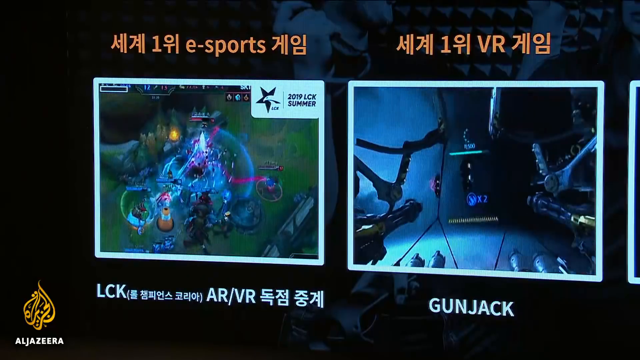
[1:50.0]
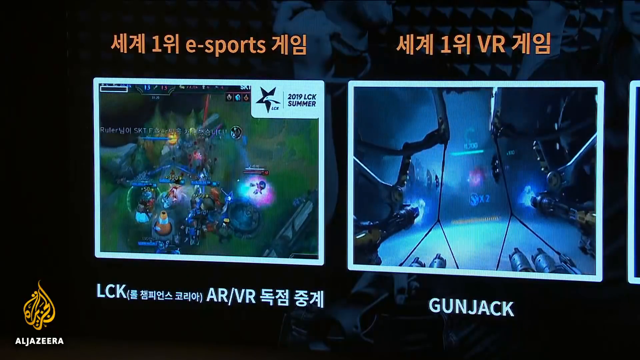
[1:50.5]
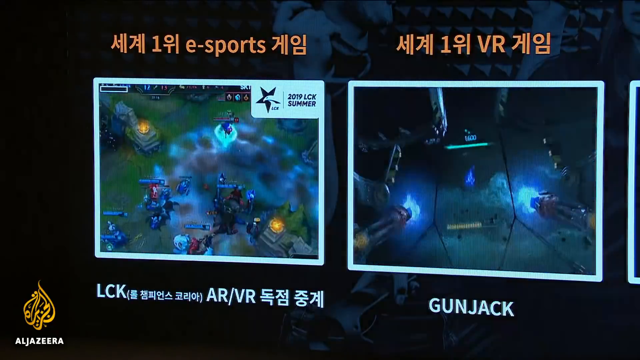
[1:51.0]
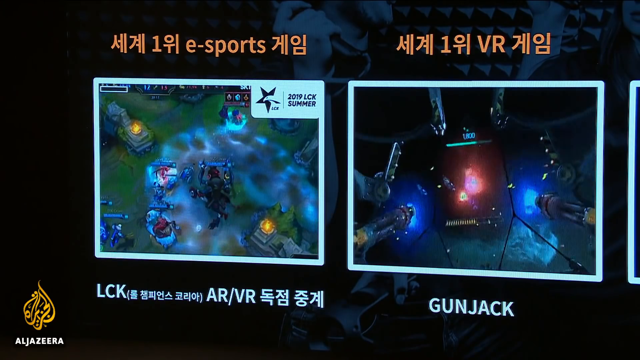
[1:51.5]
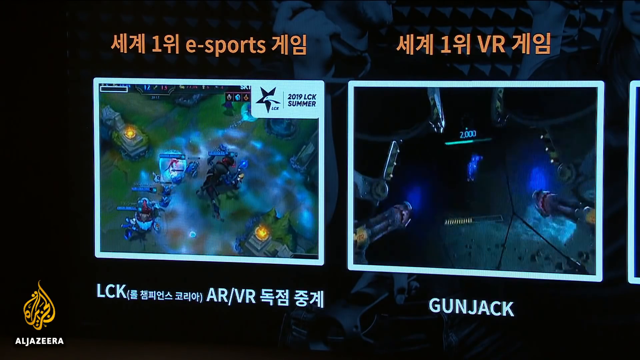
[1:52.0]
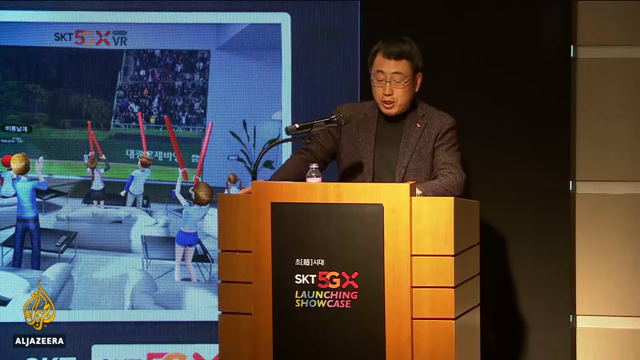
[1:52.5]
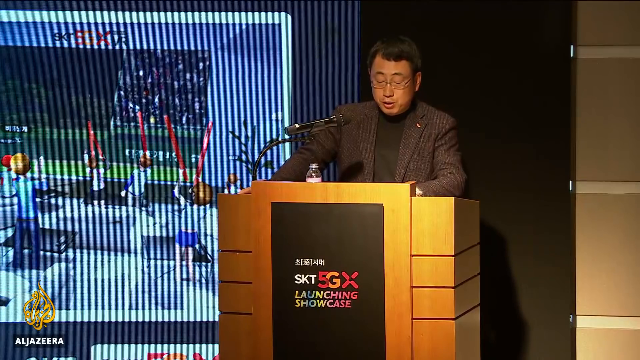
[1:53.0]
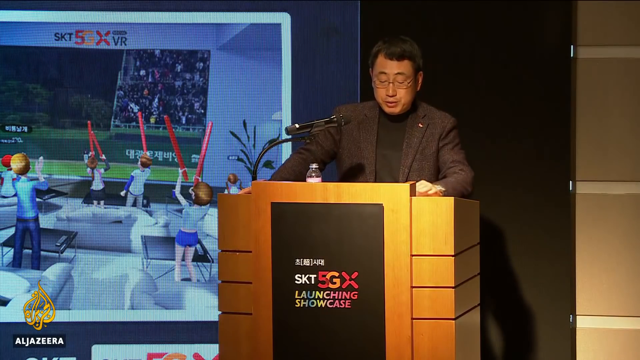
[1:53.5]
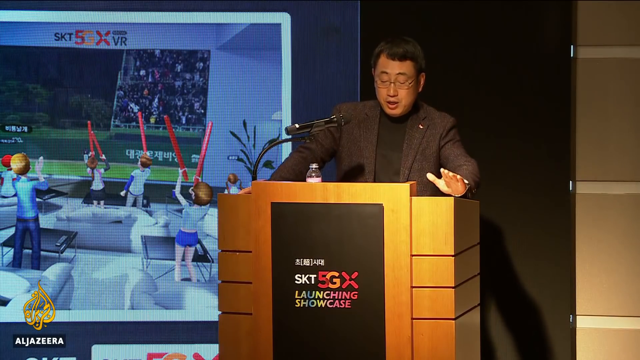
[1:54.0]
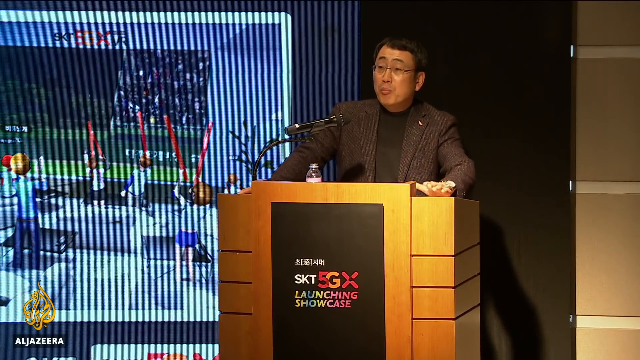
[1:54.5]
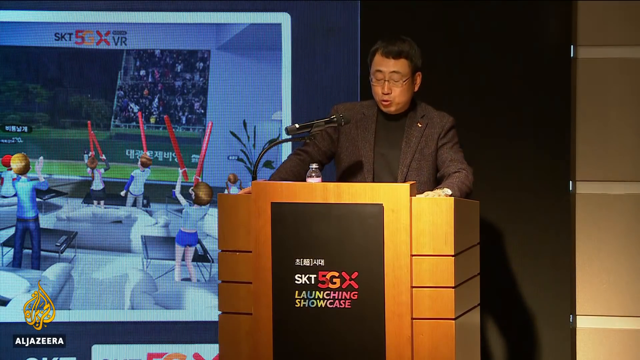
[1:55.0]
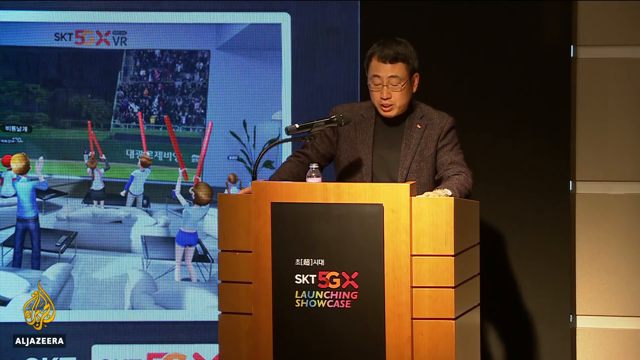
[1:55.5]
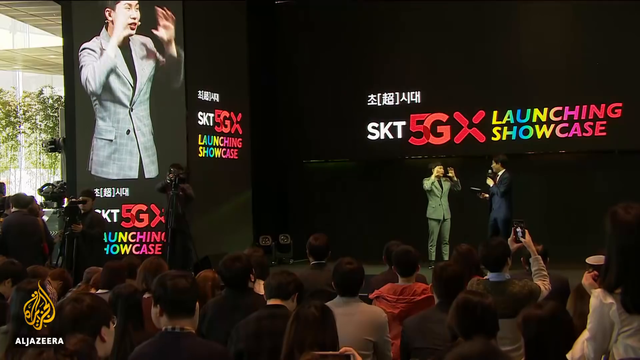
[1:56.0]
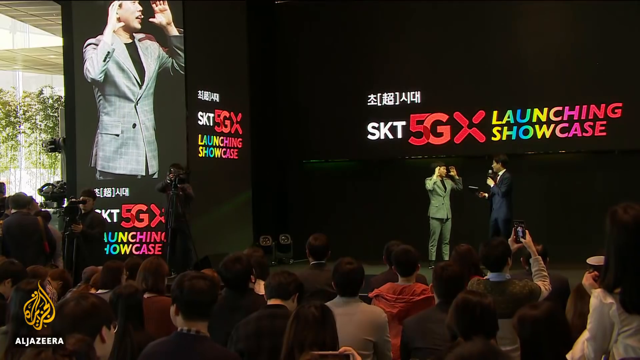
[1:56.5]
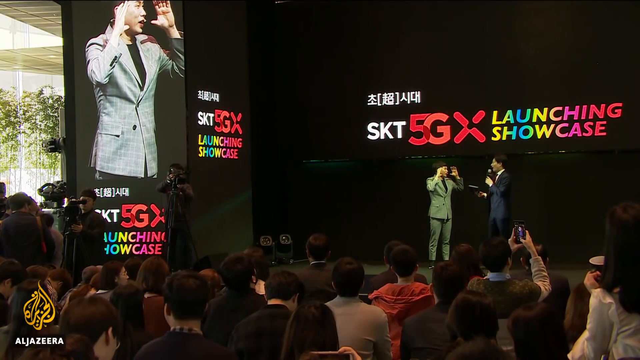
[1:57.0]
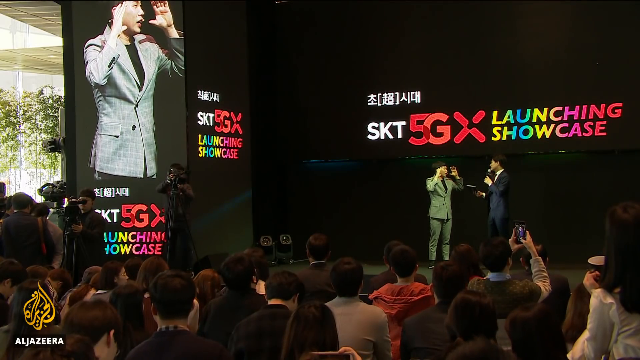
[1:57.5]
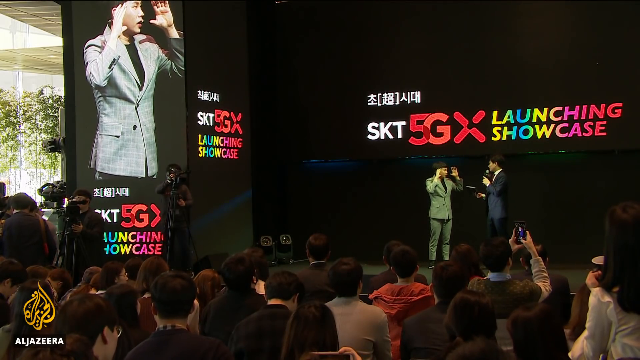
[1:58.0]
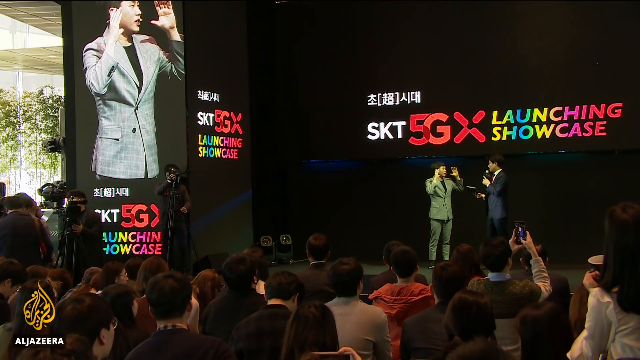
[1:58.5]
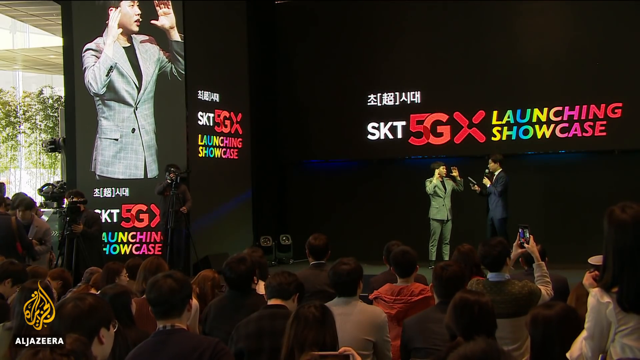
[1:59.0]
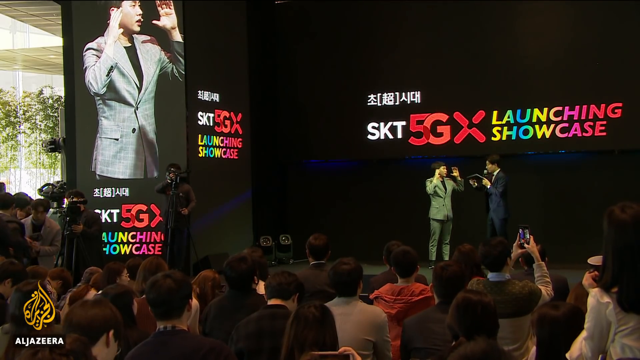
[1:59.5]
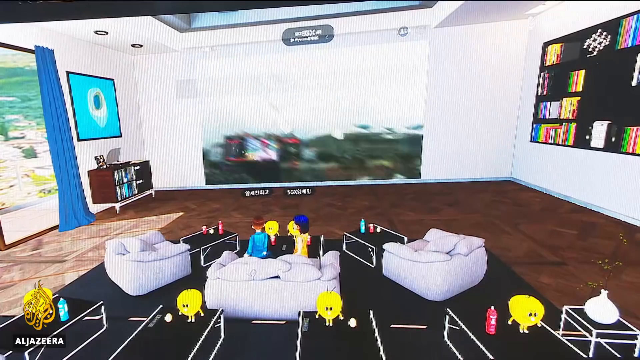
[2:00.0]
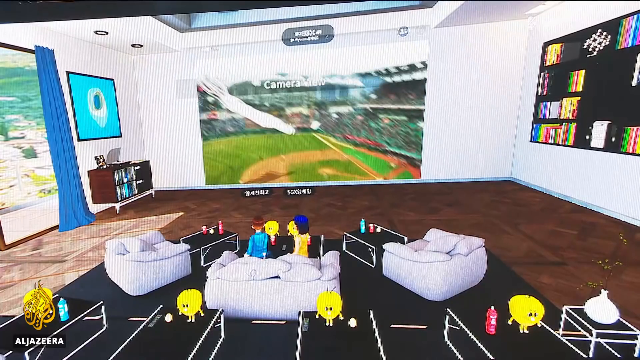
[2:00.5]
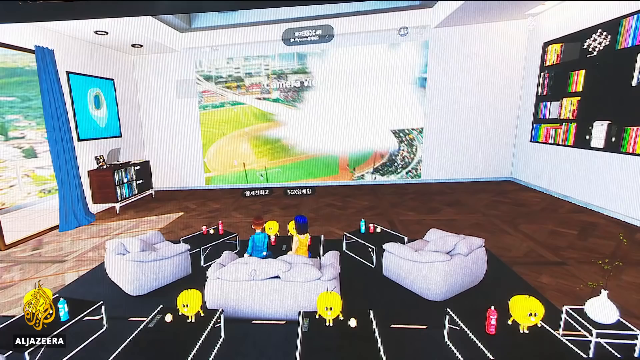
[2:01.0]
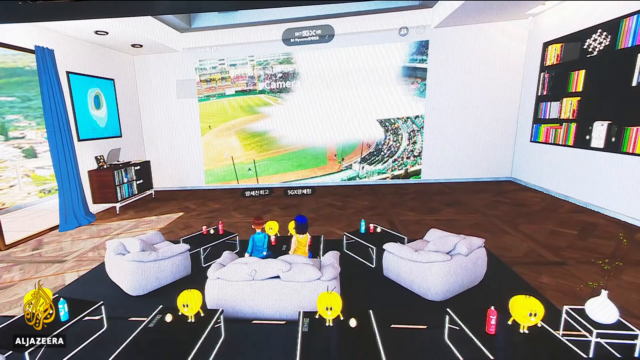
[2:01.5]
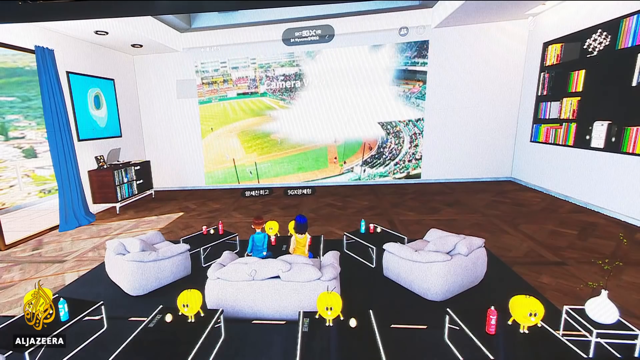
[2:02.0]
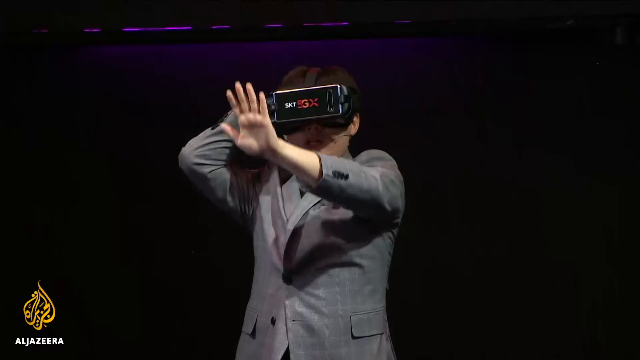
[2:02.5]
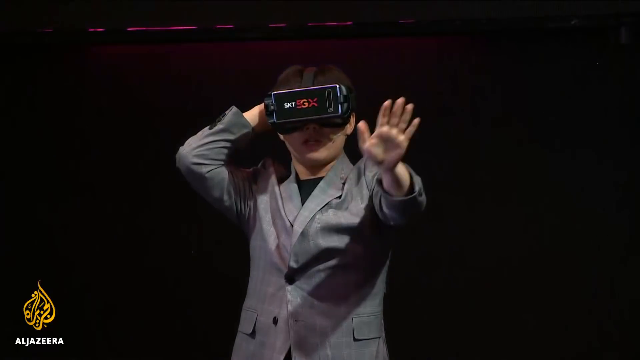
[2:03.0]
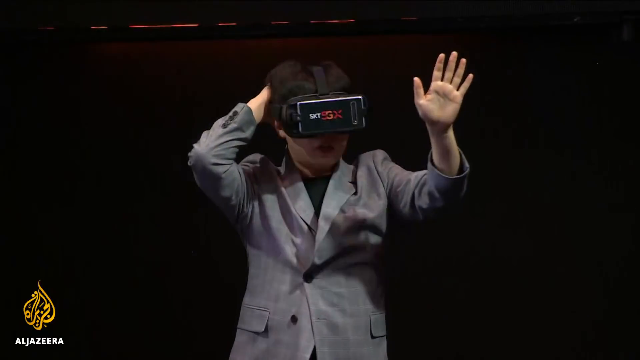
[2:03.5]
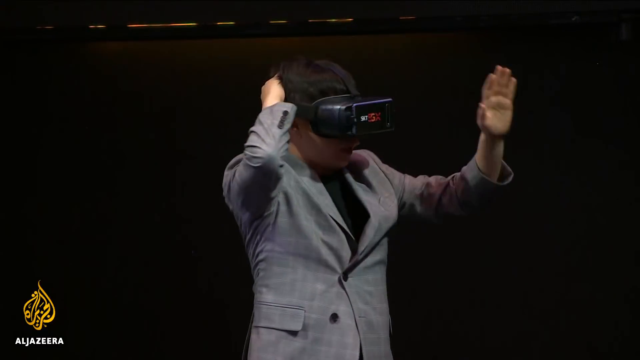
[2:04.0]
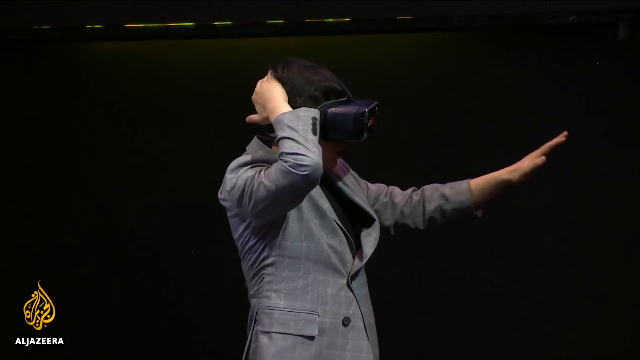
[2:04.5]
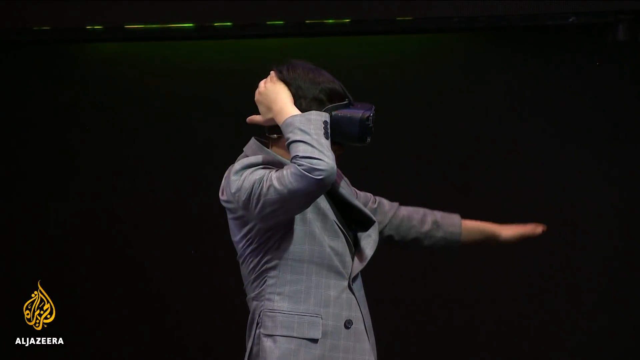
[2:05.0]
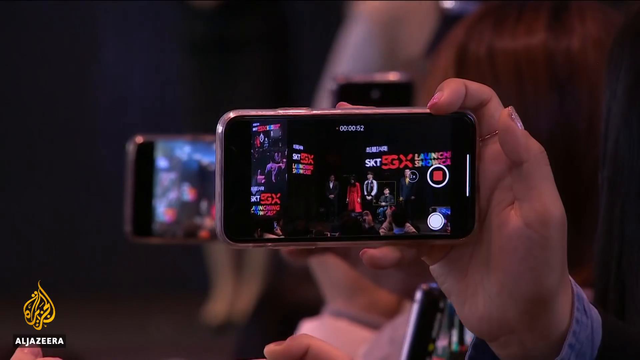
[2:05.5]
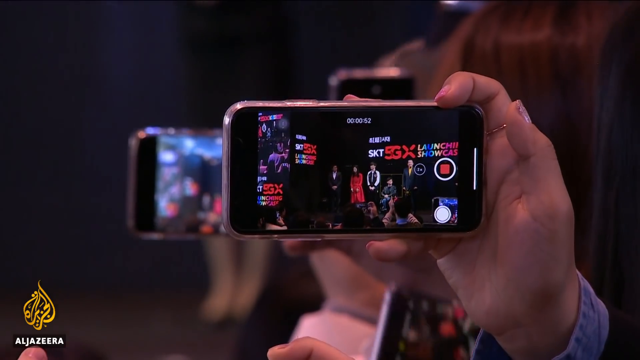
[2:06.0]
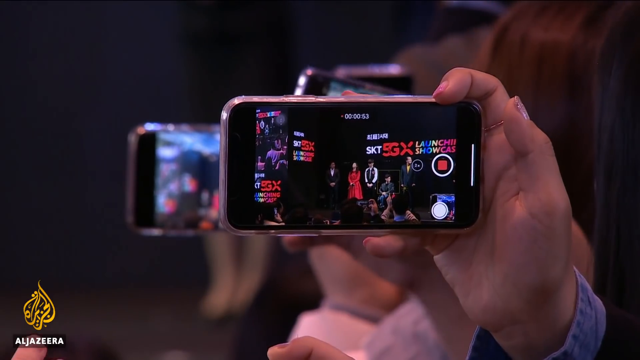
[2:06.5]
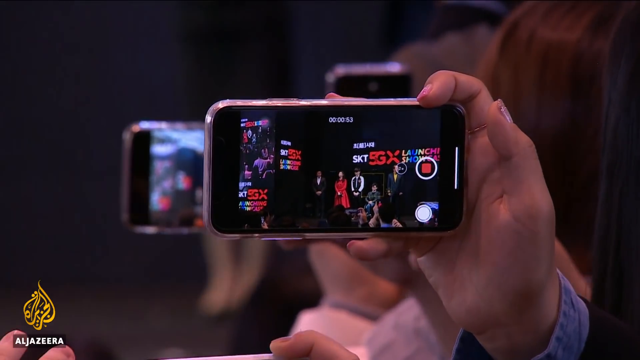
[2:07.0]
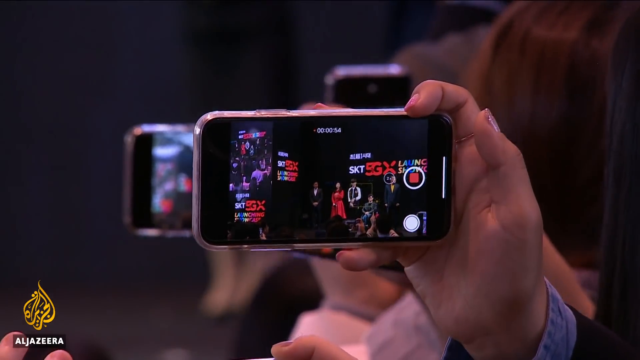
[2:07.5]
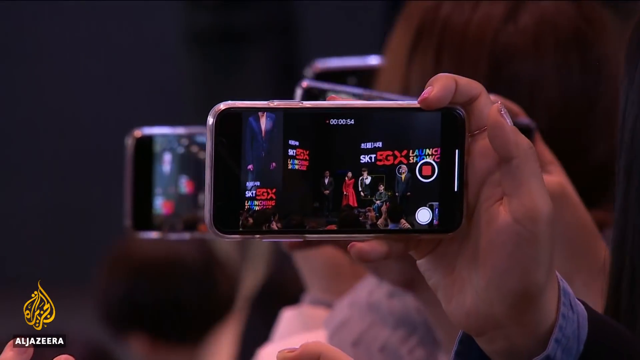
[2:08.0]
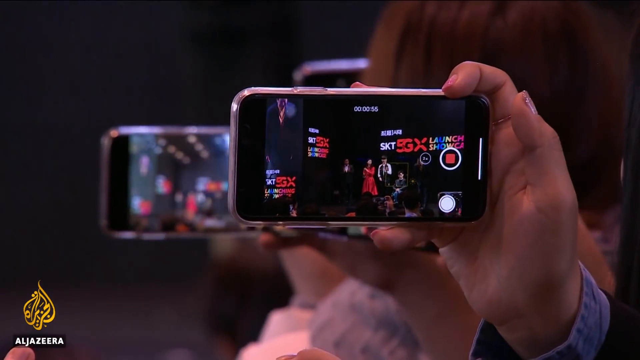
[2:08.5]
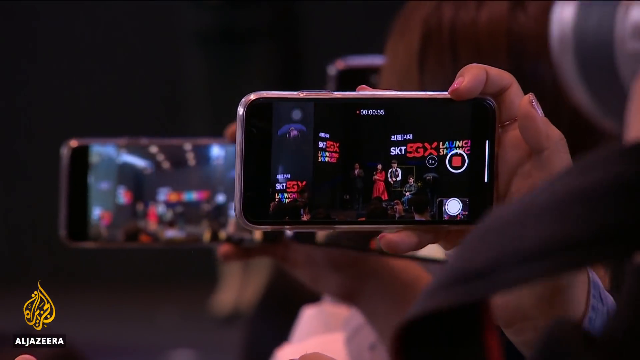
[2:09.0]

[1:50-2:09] The screen shows two examples from the virtual reality game. The camera goes back to the man in the brown suit and black shirt speaking at the podium, then switches to two other speakers at the launch showcase: a man in a gray suit speaking with a man in a blue suit, while to the left the man's image is projected on a giant screen. Camera flashes continue to go off throughout. The giant screen shows a sample of the virtual reality game, a quick flash of the inside of an apartment or home, before showing the man in the gray suit on the stage wearing a virtual reality headset as he demonstrates it for the audience. Finally, people with their cell phones take pictures of the people on the stage.